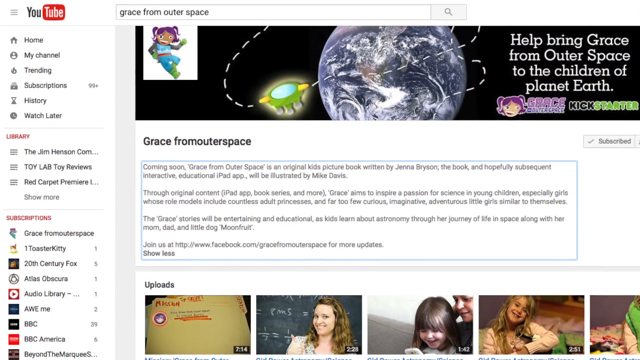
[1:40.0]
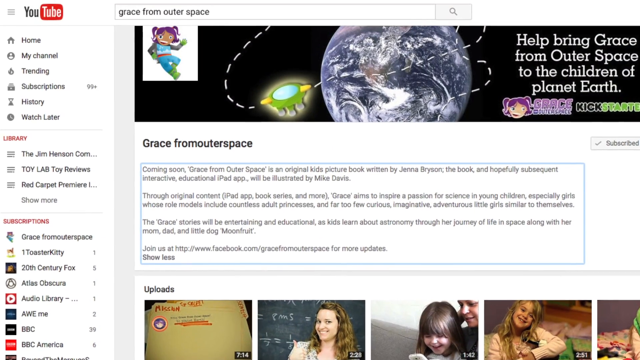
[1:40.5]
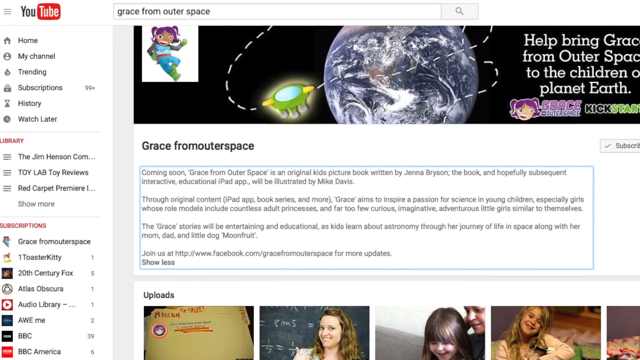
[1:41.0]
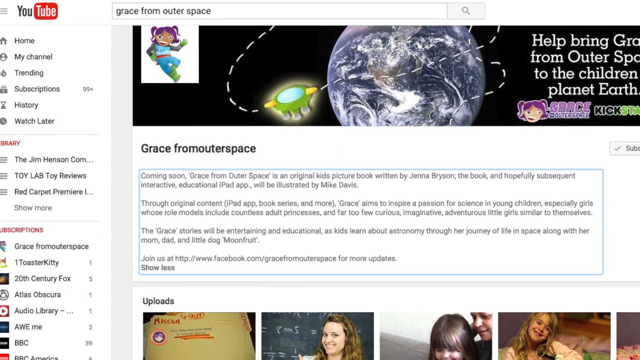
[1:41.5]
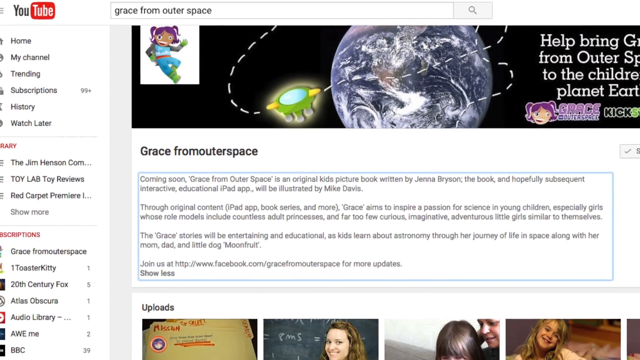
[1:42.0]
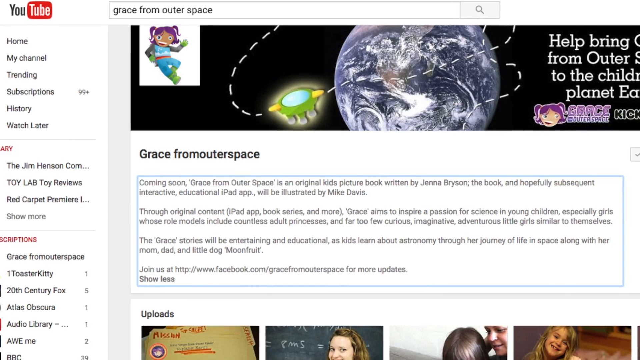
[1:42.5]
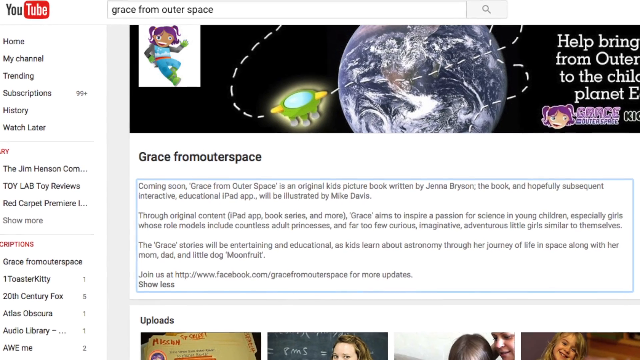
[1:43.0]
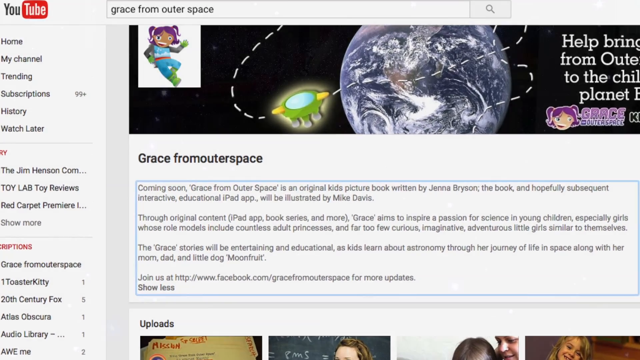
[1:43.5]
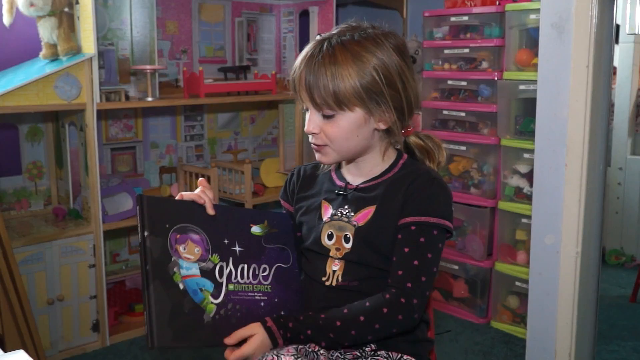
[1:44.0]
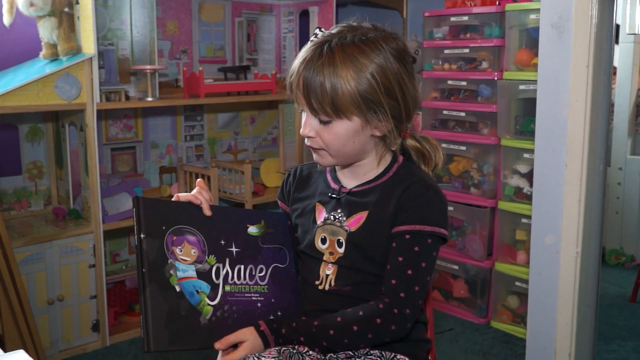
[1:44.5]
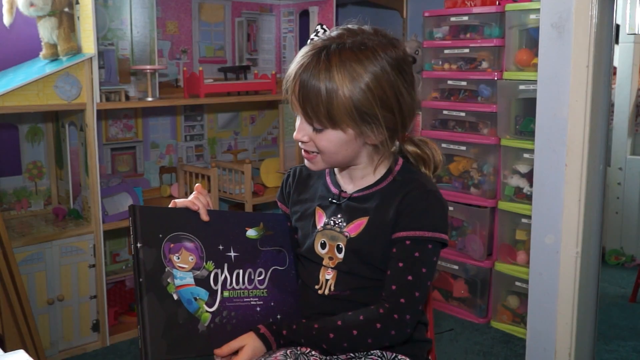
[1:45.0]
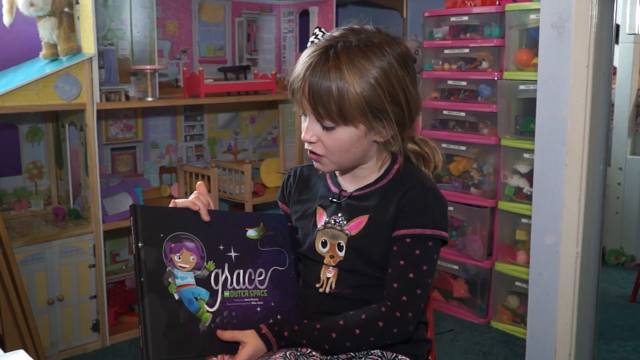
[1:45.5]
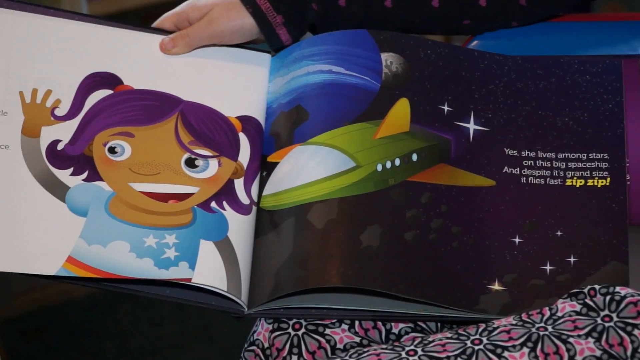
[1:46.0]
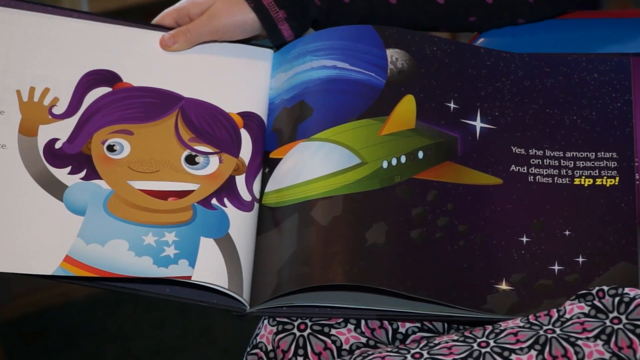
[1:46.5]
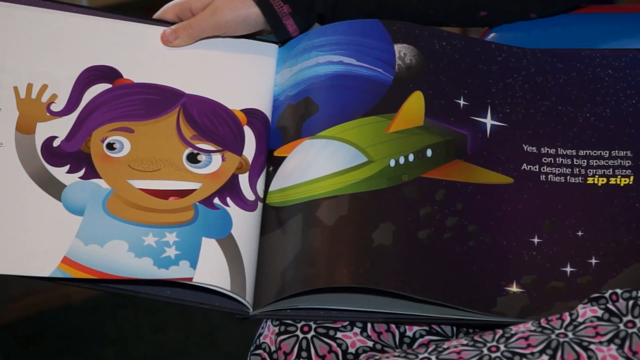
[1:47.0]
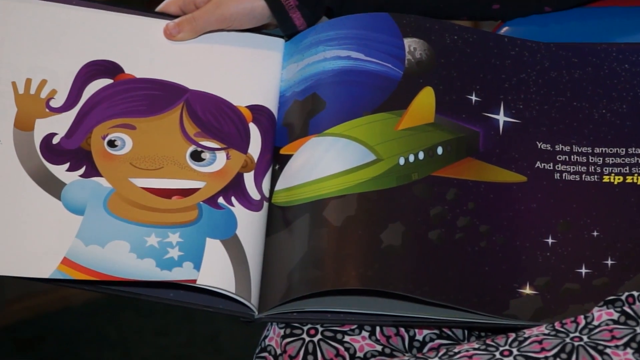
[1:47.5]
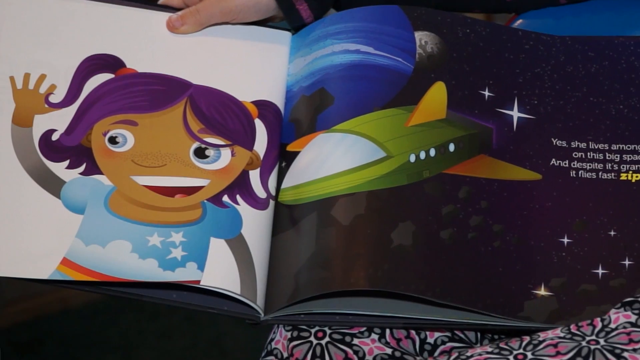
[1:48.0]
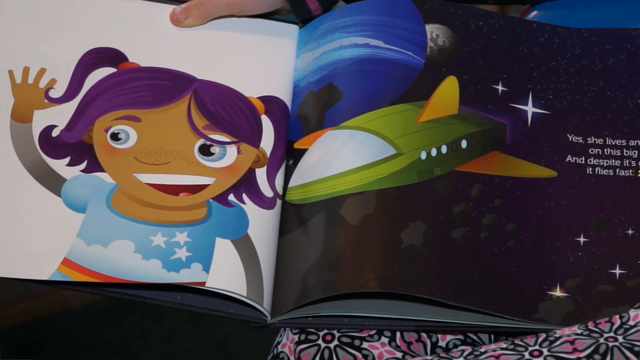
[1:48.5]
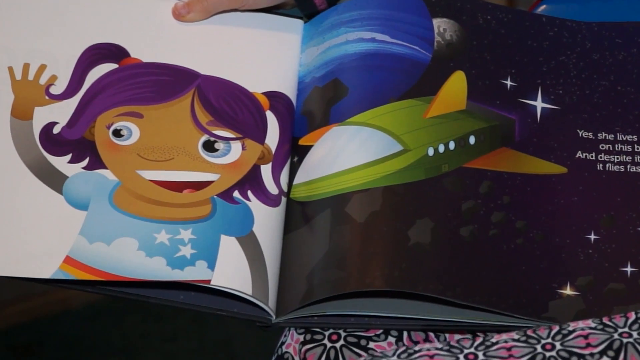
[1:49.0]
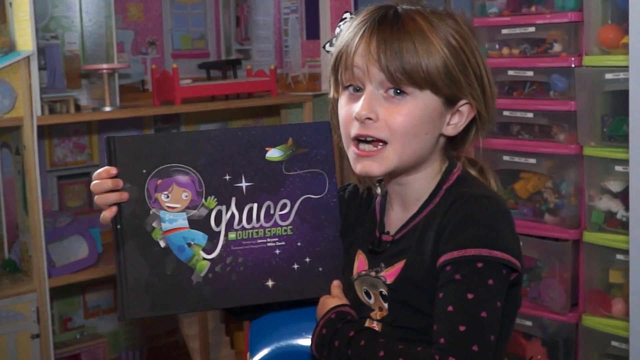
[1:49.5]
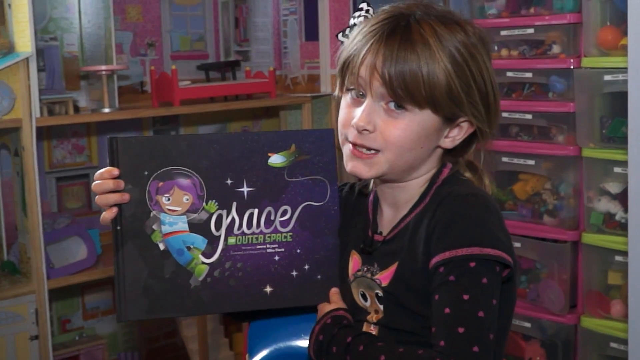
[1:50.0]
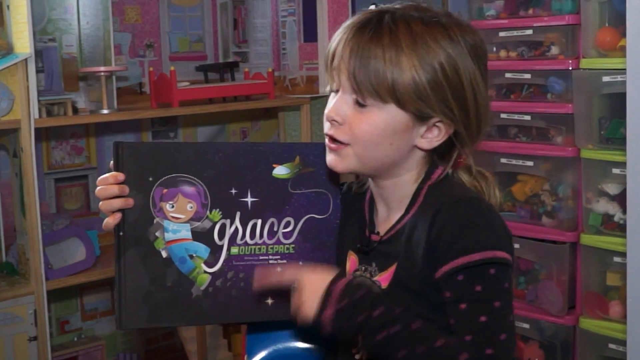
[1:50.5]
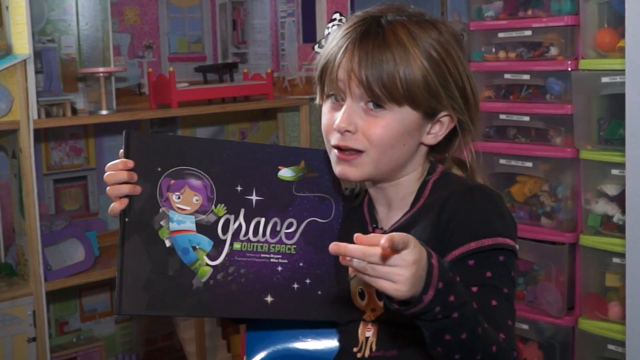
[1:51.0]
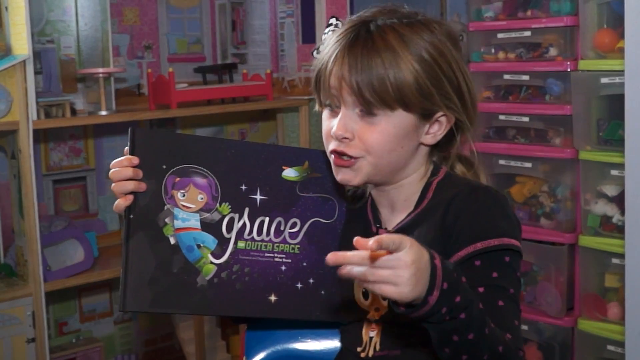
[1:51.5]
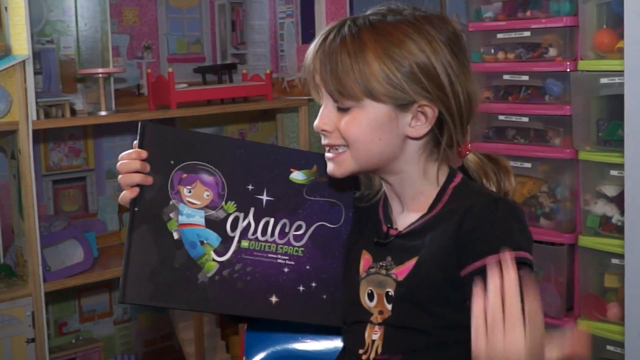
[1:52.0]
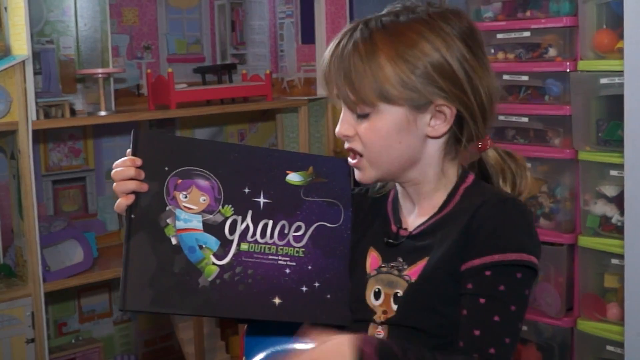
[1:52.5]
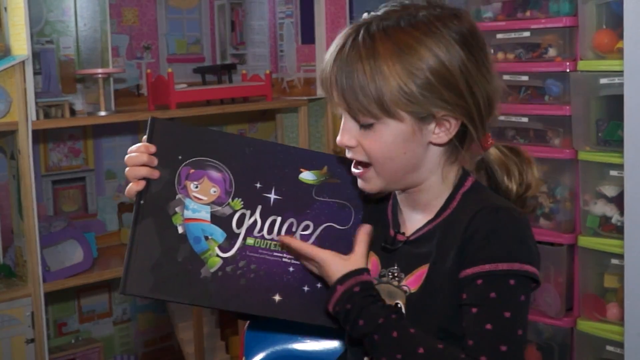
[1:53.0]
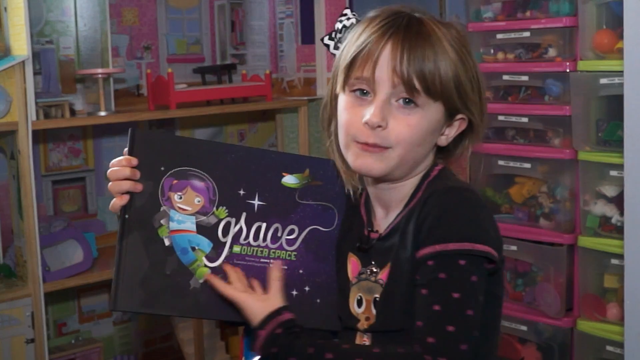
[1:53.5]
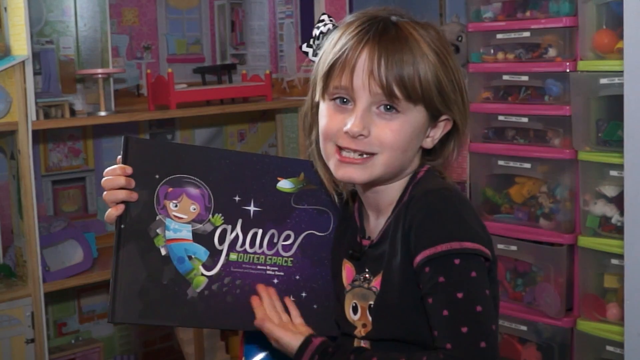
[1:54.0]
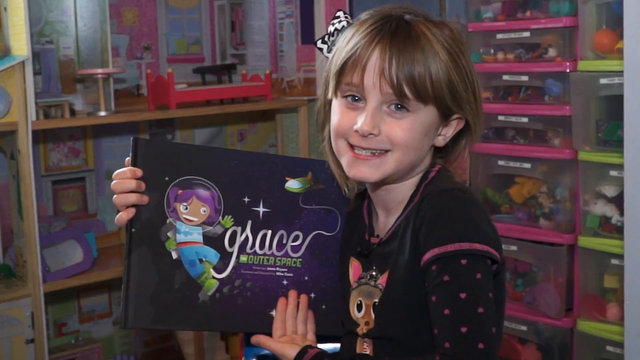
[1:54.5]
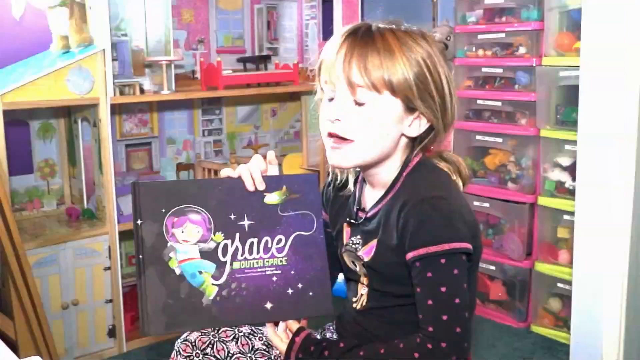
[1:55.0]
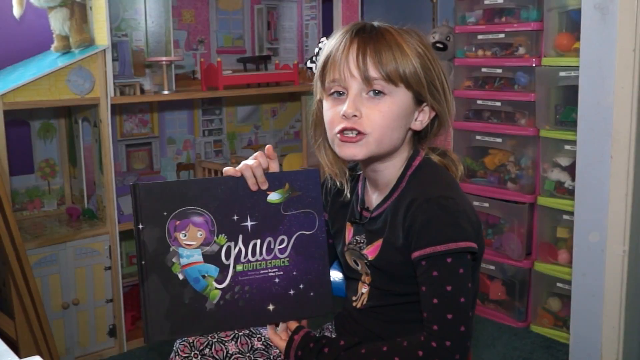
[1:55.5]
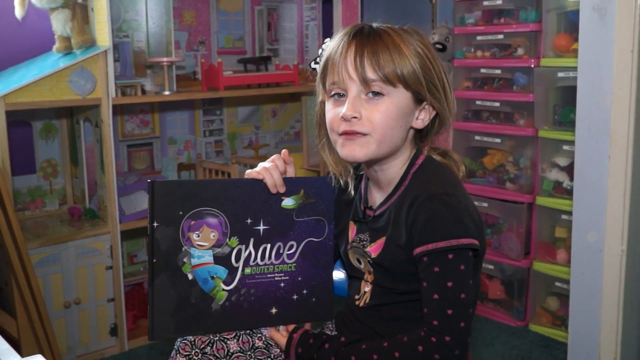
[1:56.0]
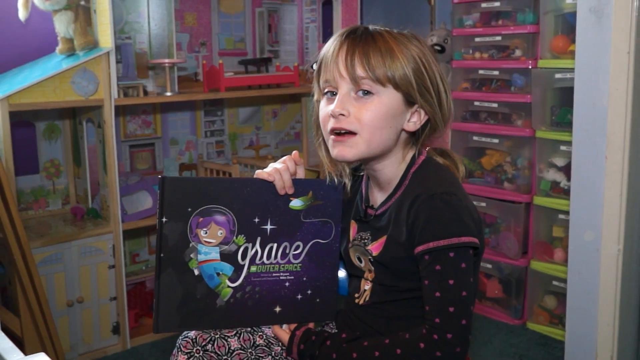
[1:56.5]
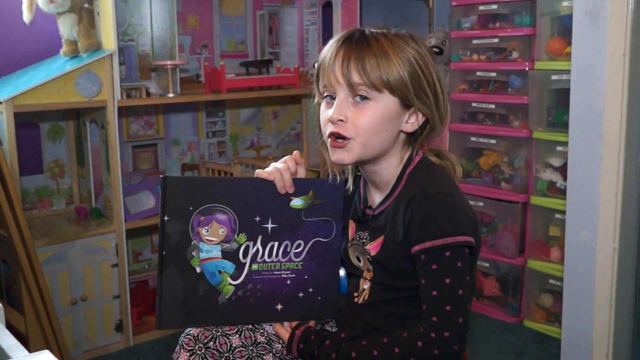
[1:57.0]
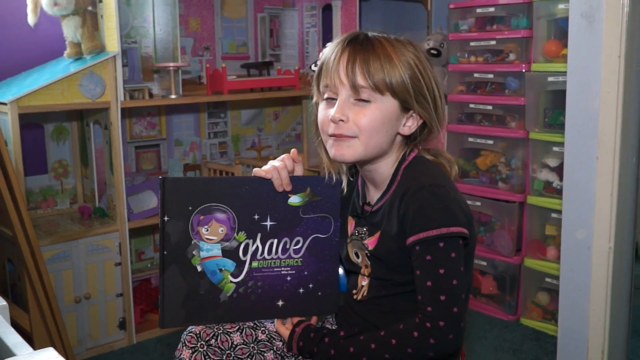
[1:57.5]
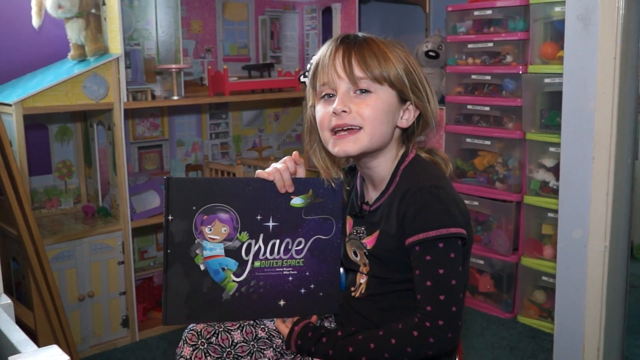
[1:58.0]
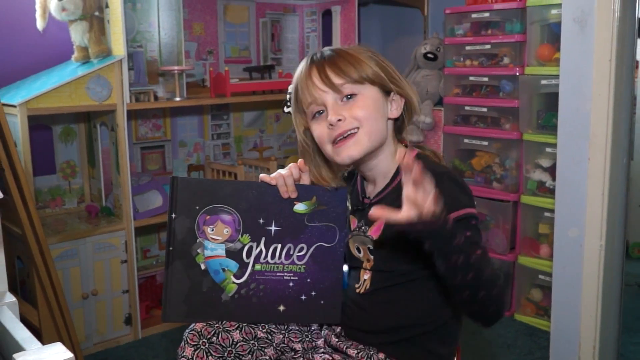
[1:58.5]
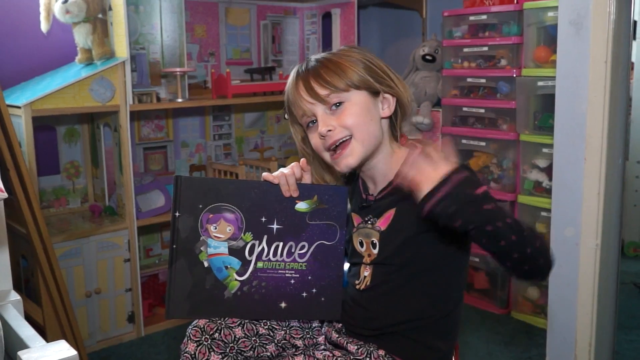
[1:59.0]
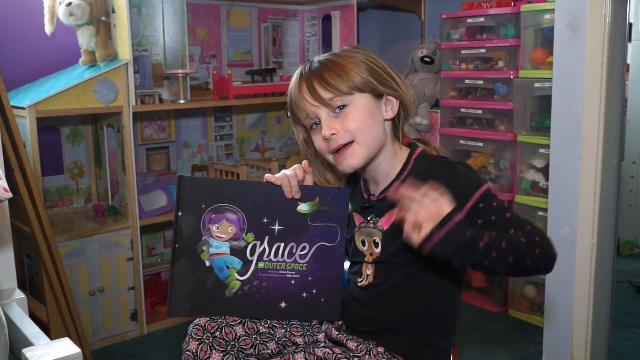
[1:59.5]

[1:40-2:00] The YouTube page for Grace from Outer Space shows Grace, the purple-haired young astronaut, and her spaceship traveling around the world leaving its trace, with the caption "help bring grace from outer space to the children on planet earth". There are also details about the book, the author Jenna Bryson and the illustrator. The young girl is then back in her room holding the book with the title to the camera, and she opens it to a page showing Grace waving, with the spaceship on the other side of the page. The camera goes back to the girl holding the book; she talks about it again and points to the camera, encouraging viewers to read Grace from Outer Space. She then waves to the camera as she holds the book from the top on her knee.